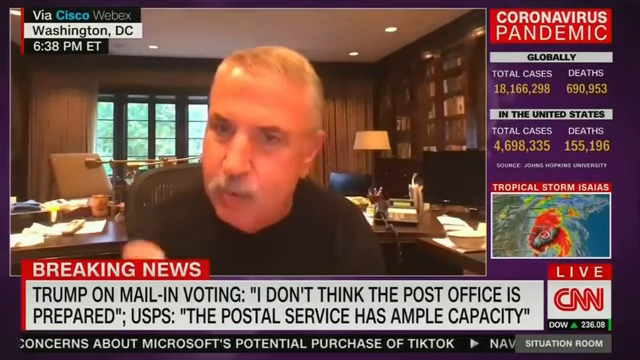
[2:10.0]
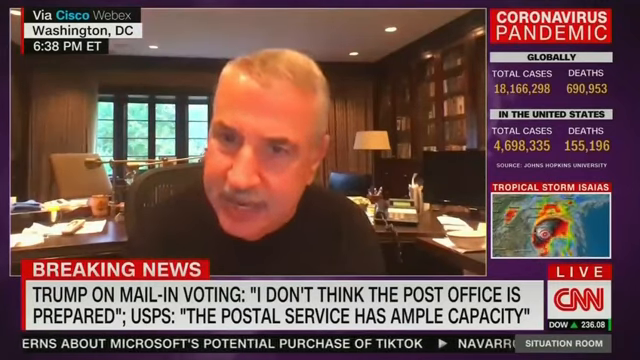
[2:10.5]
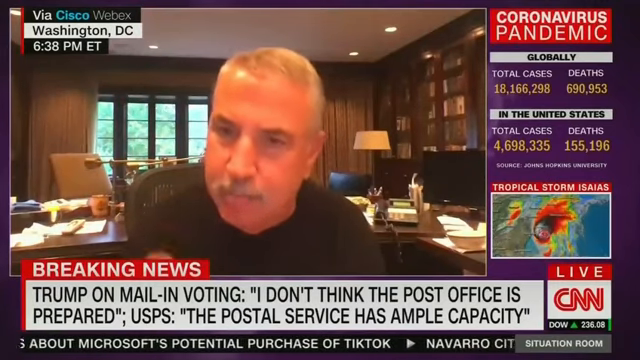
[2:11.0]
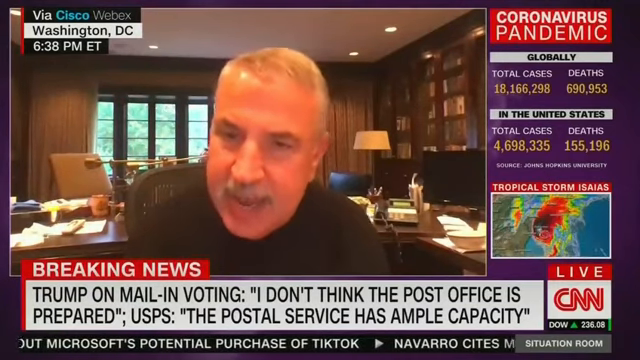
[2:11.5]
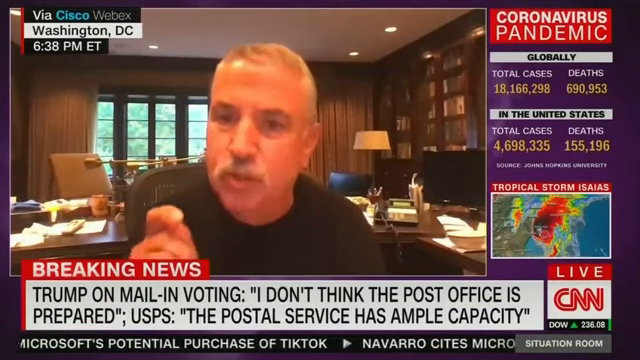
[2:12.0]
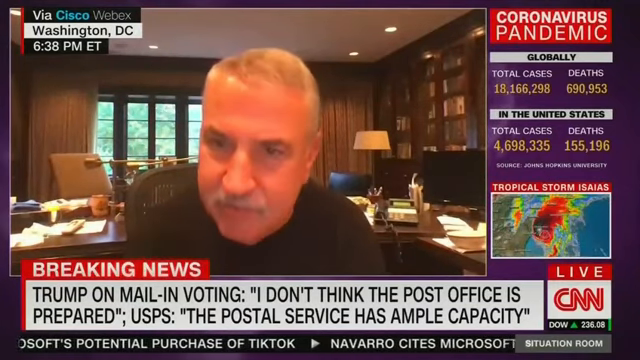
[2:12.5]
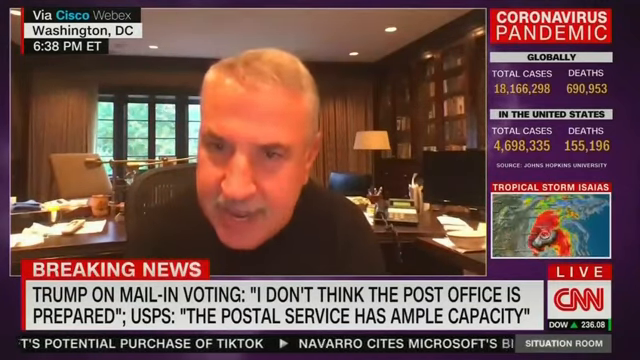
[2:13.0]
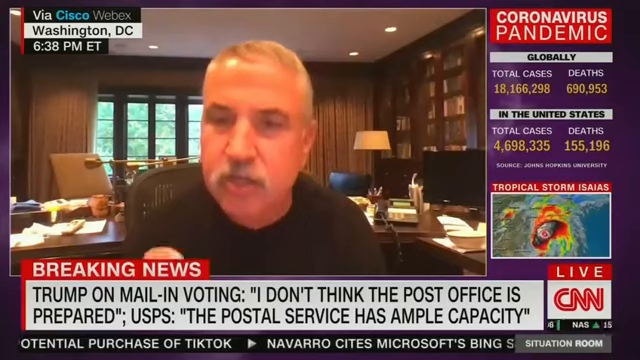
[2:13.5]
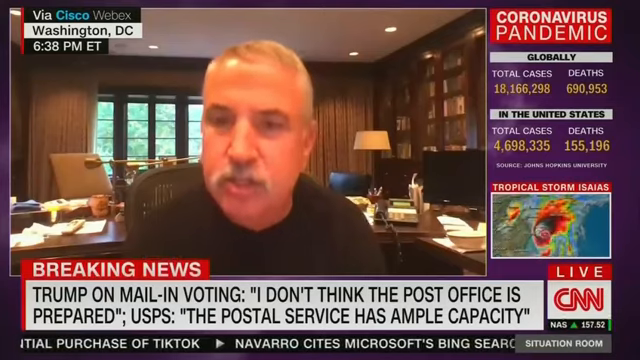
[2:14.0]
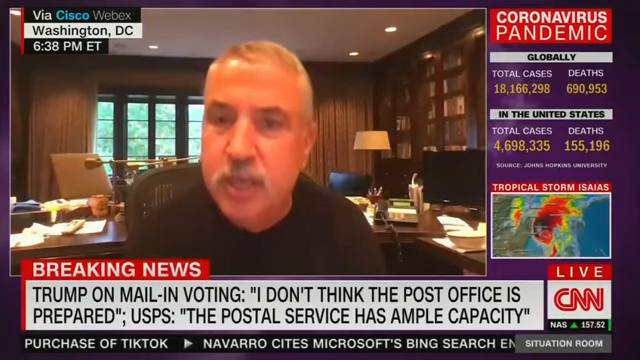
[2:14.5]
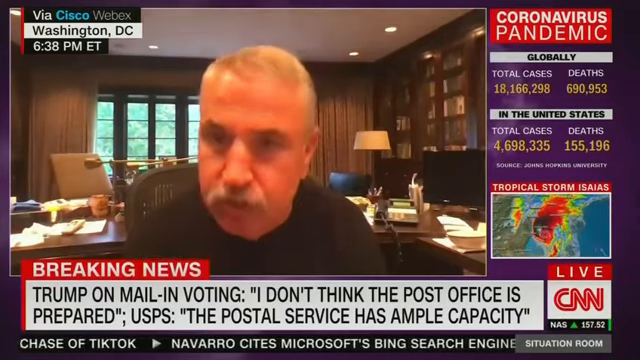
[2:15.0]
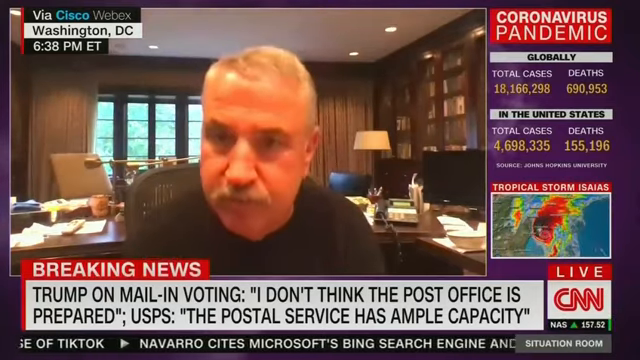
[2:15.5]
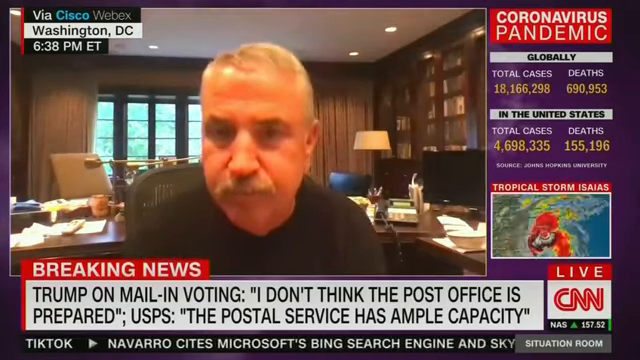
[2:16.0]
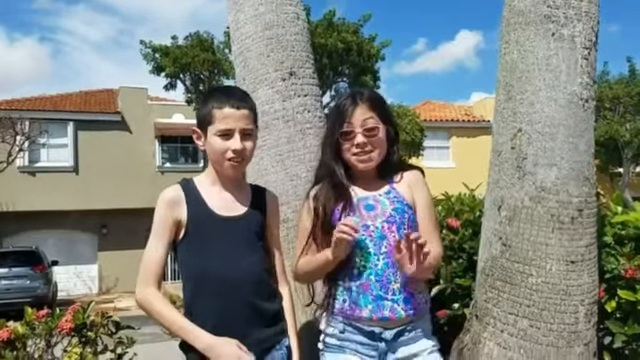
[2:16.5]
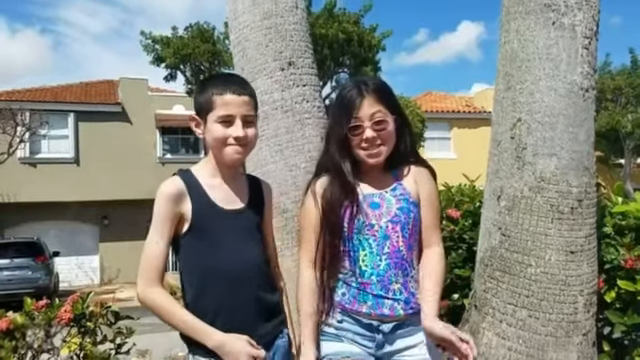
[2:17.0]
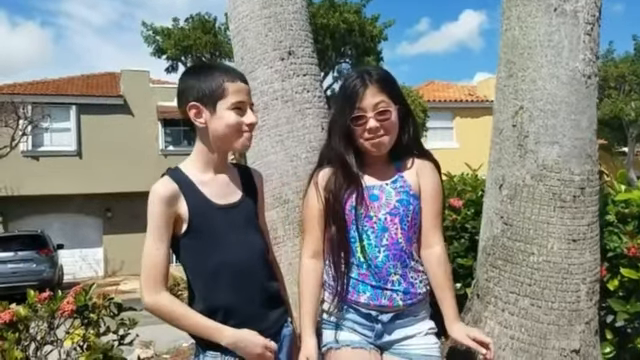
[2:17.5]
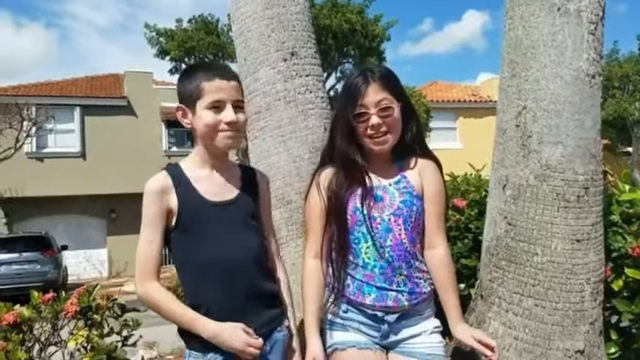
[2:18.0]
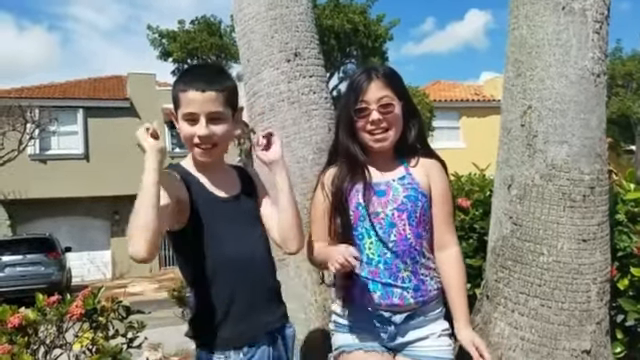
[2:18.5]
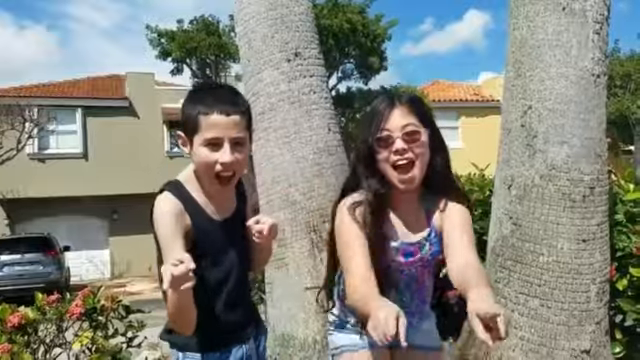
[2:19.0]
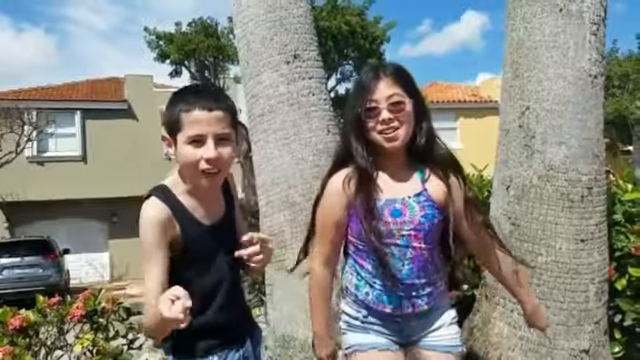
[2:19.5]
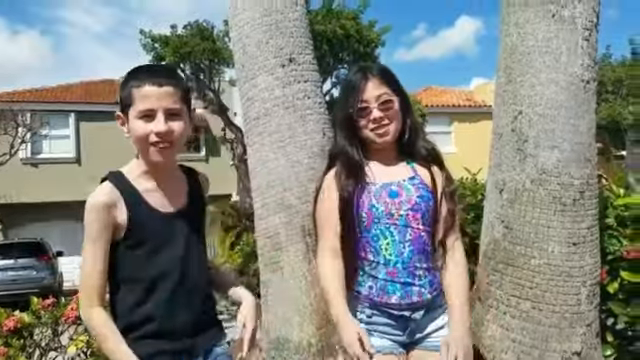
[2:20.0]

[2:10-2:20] The man appears from Washington DC, with the time 6:38 PM shown. A breaking news banner reads "Trump on mail-in voting: I don't think the post office is prepared. USPS, the Postal Service, has ample capacity." Text shows the COVID pandemic globally with total cases and deaths, plus total cases and deaths in the United States. It is all reported live from CNN, and a tropical storm is being tracked. News runs along the bottom of the screen, reported from the Situation Room. Right at the end, two unidentified kids are shown somewhere outside, next to some palm trees or something.